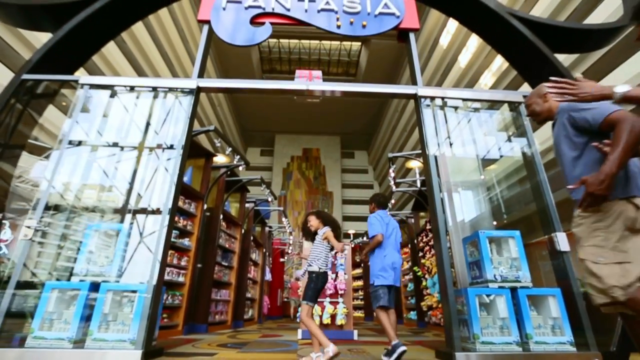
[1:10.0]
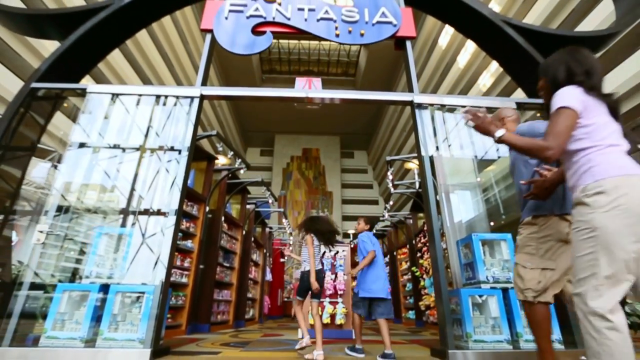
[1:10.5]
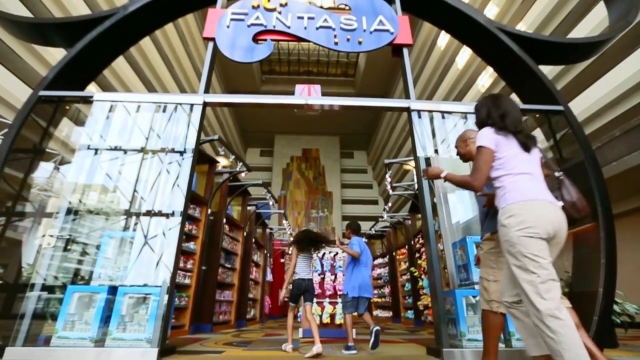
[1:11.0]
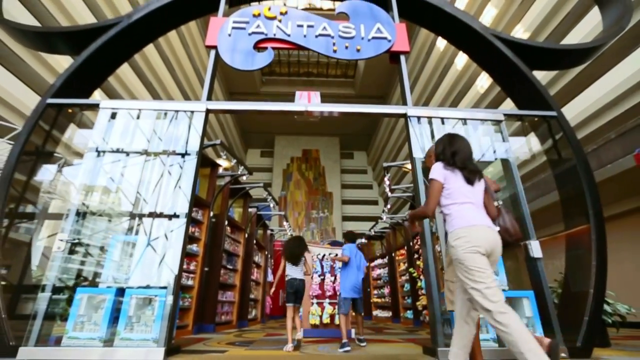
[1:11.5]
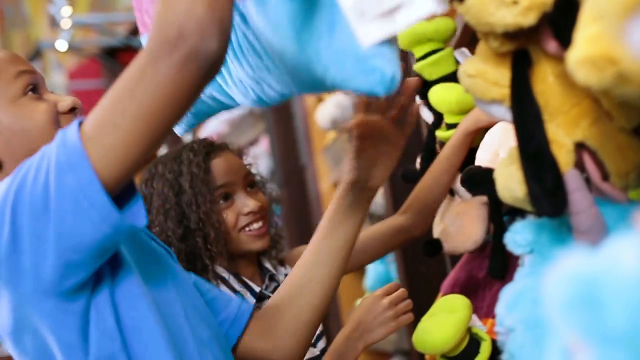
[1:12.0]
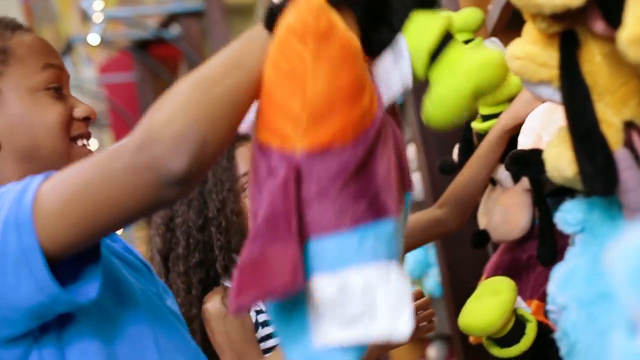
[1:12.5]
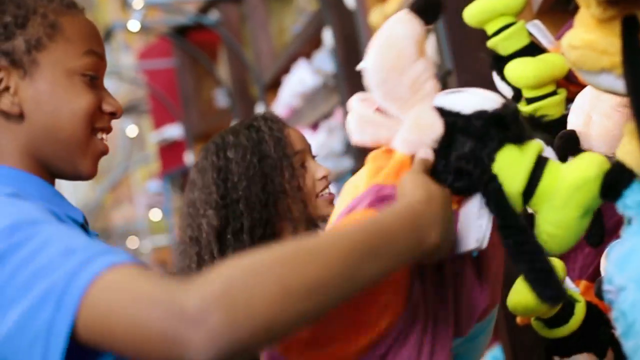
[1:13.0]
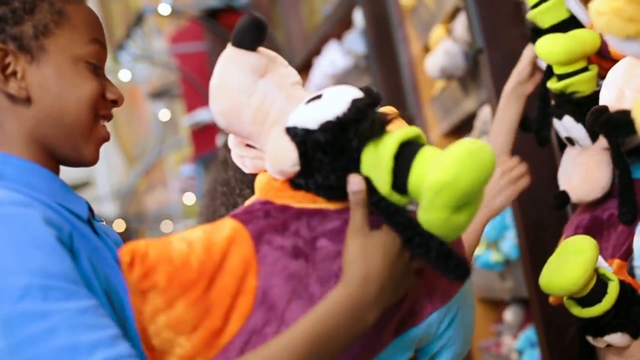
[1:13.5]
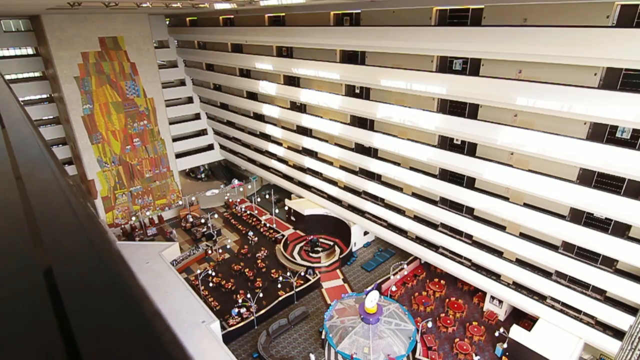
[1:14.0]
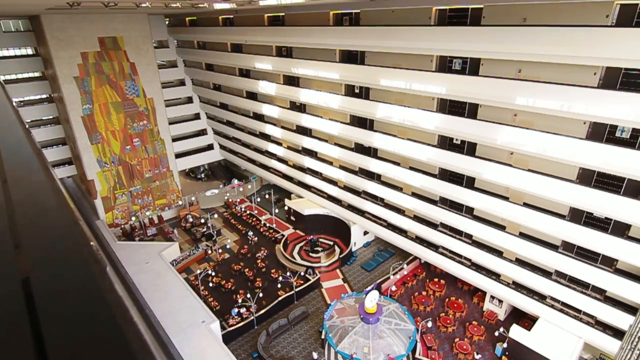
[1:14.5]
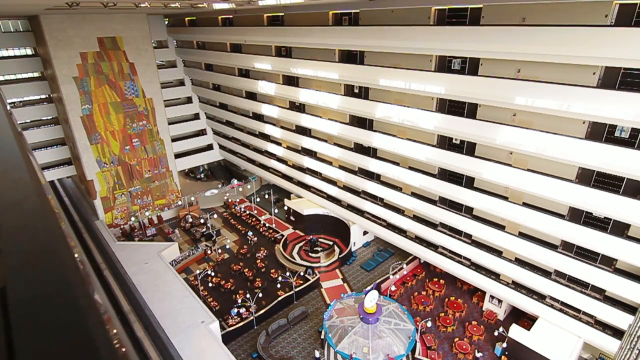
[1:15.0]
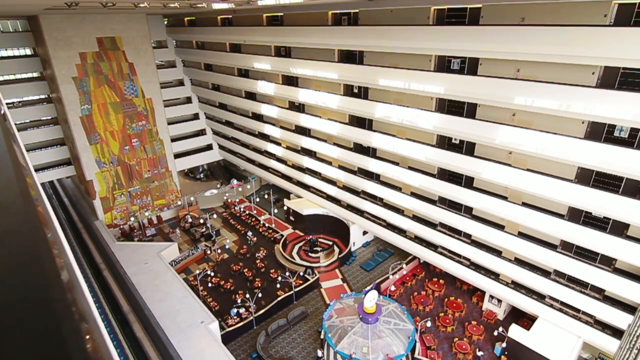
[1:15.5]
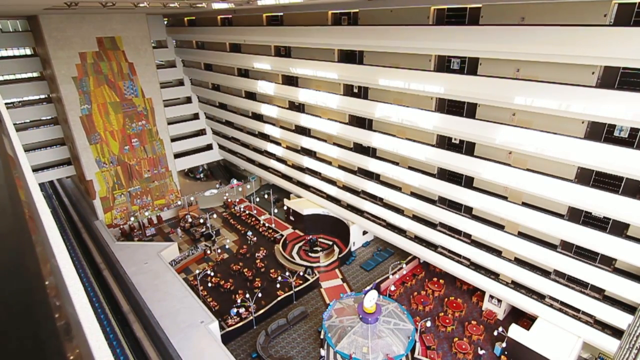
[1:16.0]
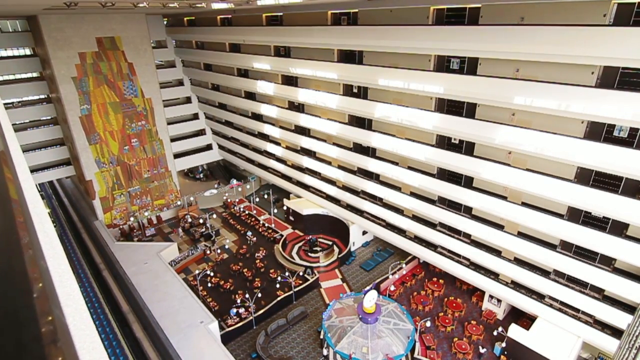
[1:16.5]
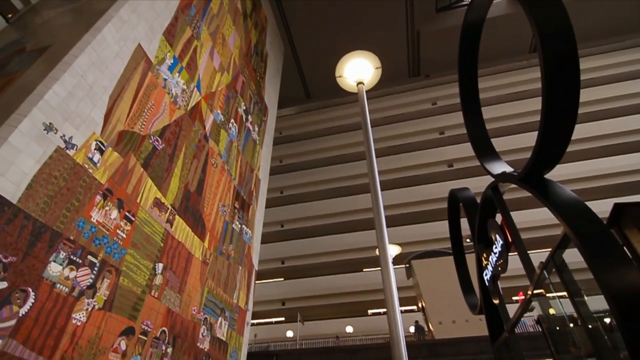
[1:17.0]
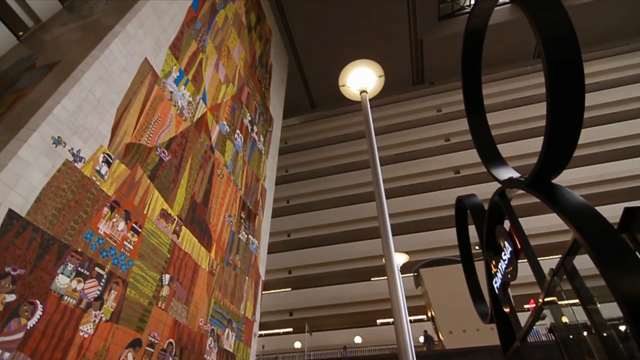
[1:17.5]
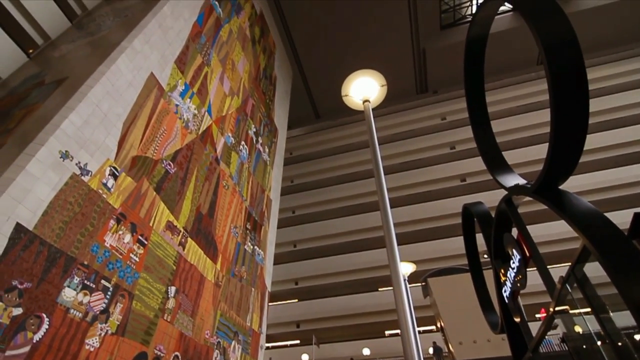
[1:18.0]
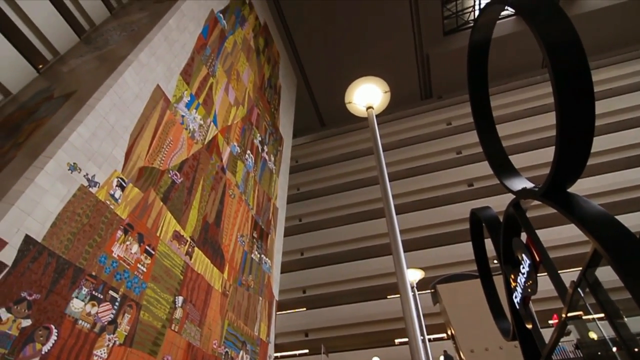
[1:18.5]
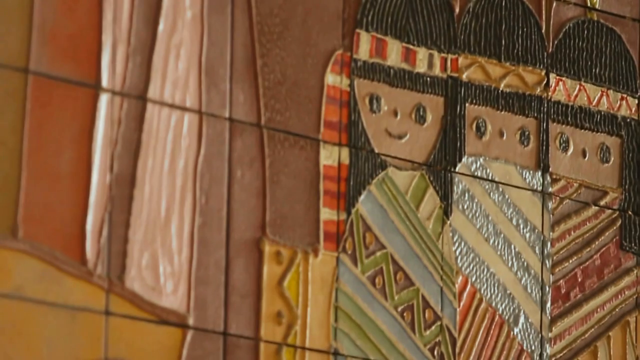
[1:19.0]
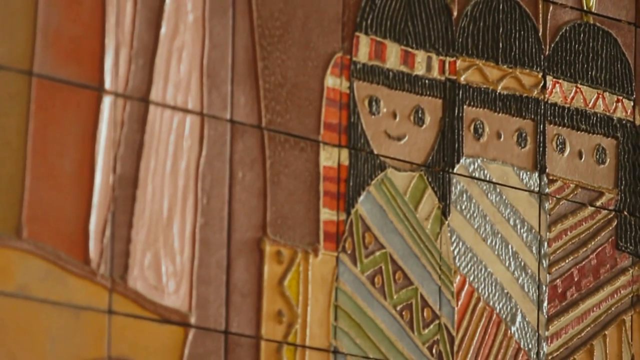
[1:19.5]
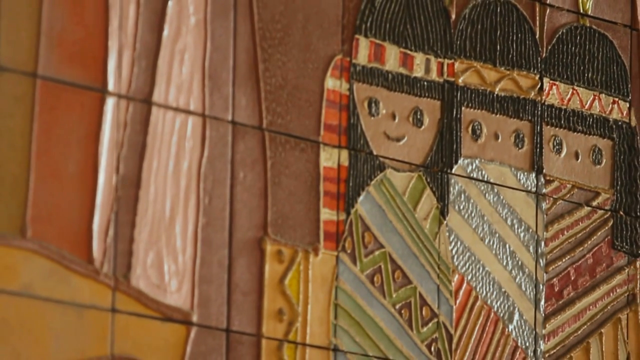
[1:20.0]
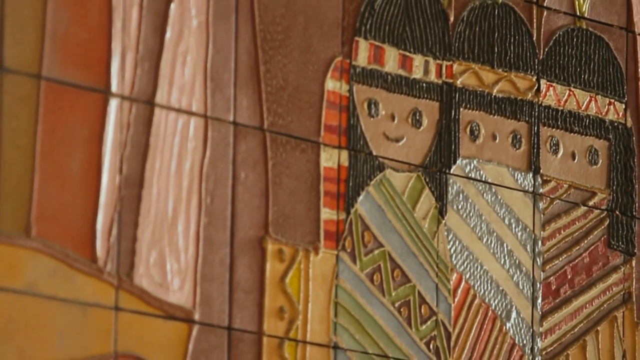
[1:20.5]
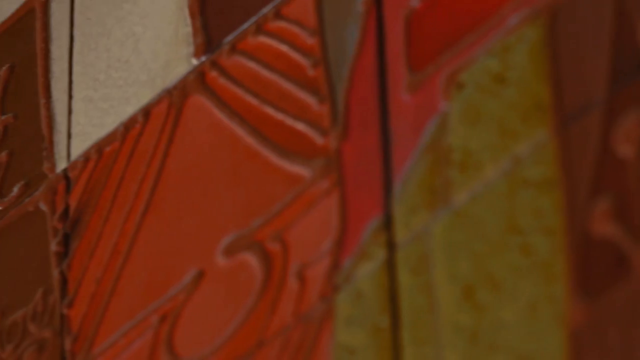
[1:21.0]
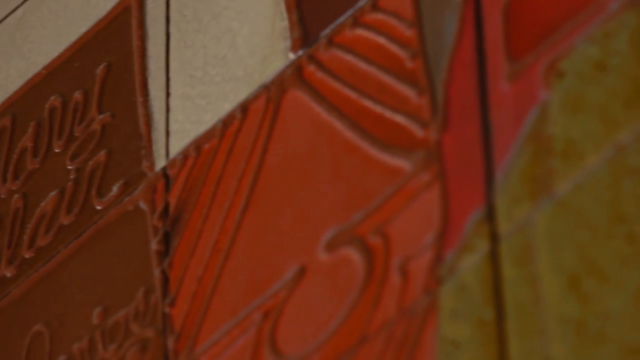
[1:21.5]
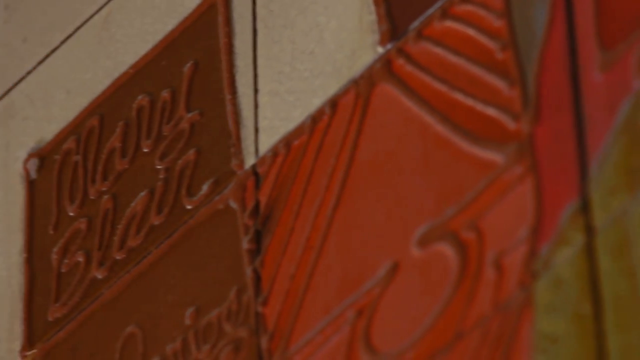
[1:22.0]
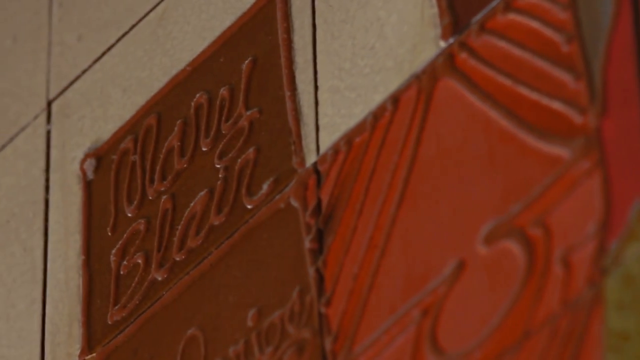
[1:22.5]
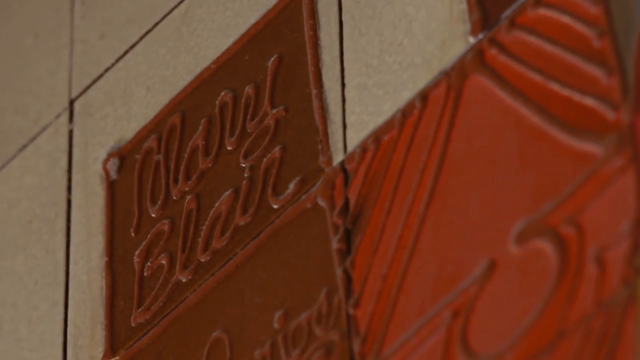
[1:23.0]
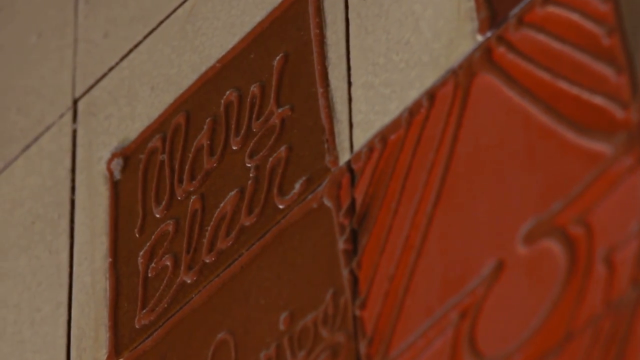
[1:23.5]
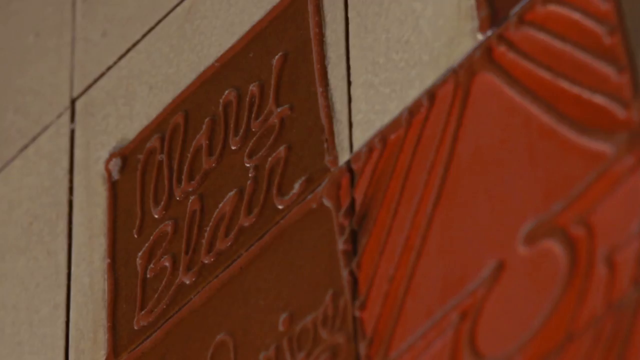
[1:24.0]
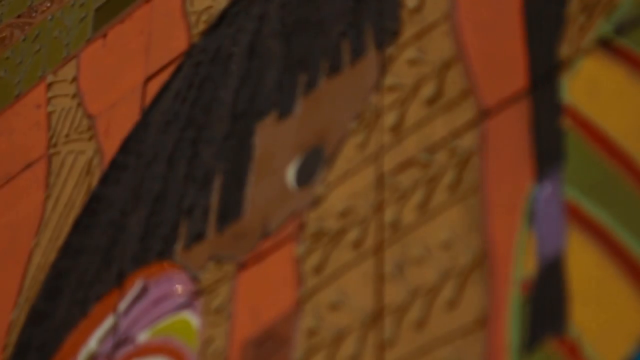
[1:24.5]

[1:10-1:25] Under the title "Disney's Contemporary Resort, Walt Disney World," two young children walk into the Fantasia gift shop, turning around briefly to wave their parents in. They go straight to the wall of stuffed animals, each takes one, and with excited faces they play with the stuffed animals along the display. An overview shot follows of what looks like the resort lobby, with a floor-to-ceiling tile mural at least 10 stories high containing very detailed images of Native nations. The name on the tile reads "Mary Blair." The lobby is shown in detail; it is an interior lobby, with the hallways of the different floors of rooms exposed on the right and left sides.